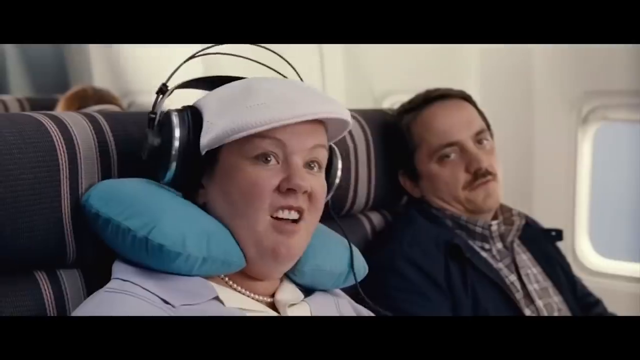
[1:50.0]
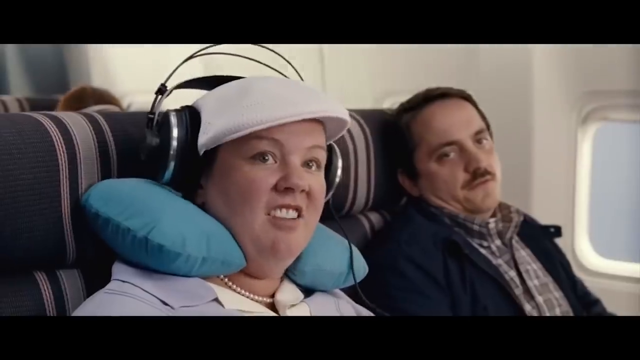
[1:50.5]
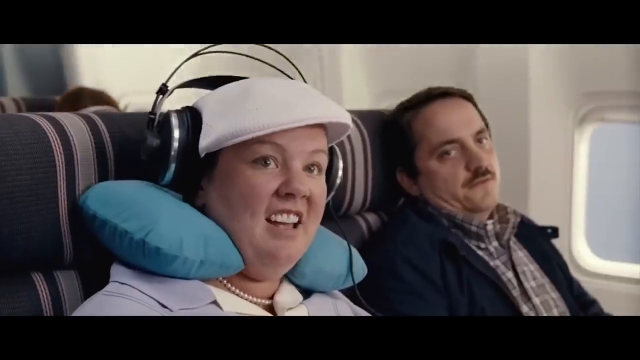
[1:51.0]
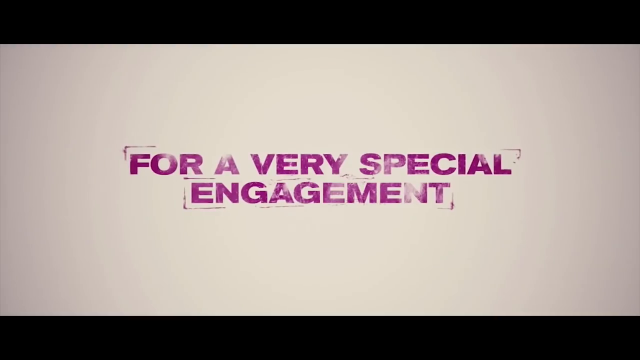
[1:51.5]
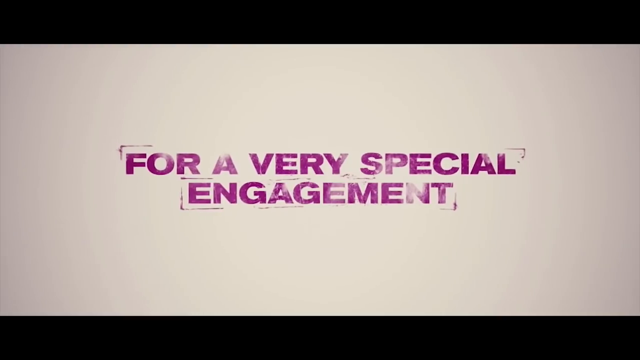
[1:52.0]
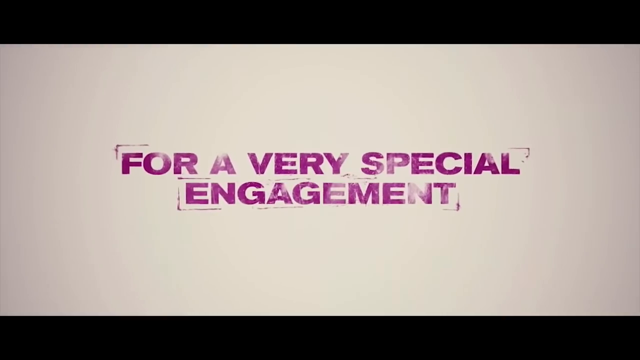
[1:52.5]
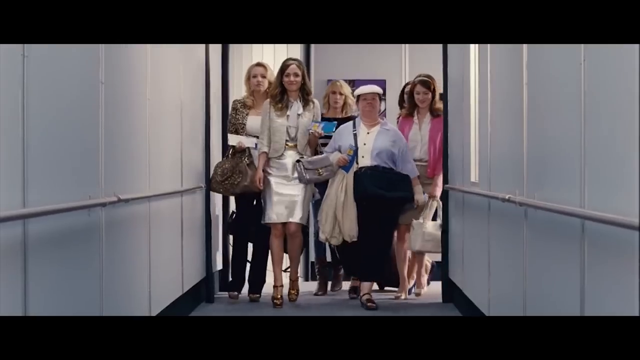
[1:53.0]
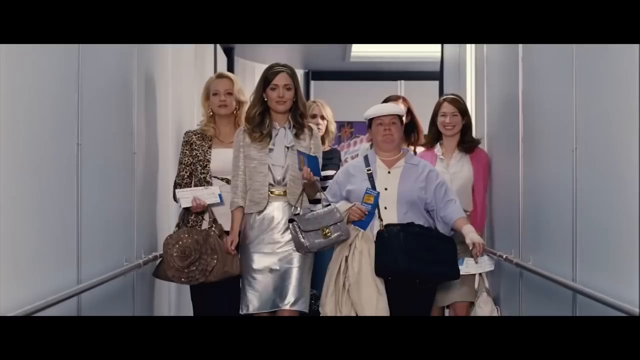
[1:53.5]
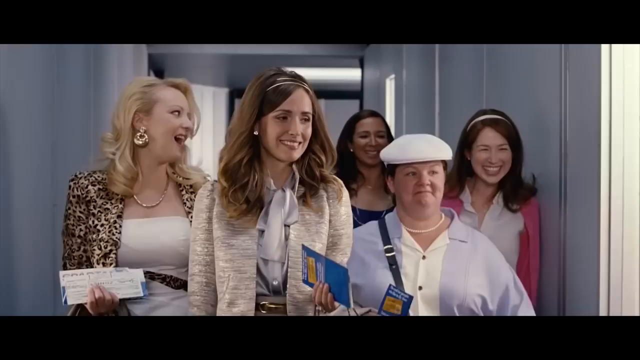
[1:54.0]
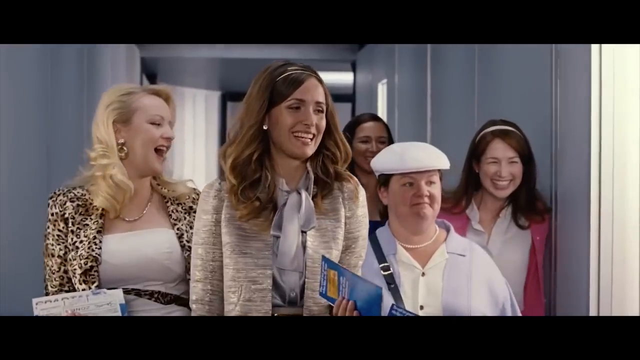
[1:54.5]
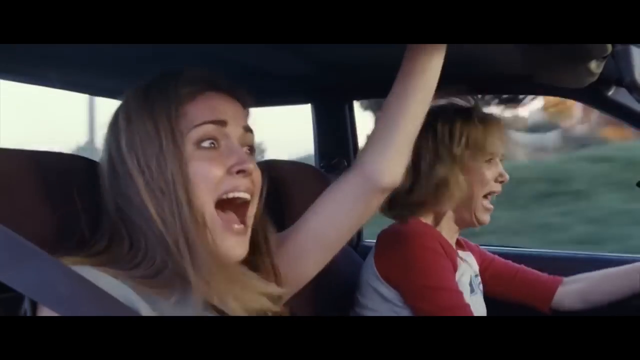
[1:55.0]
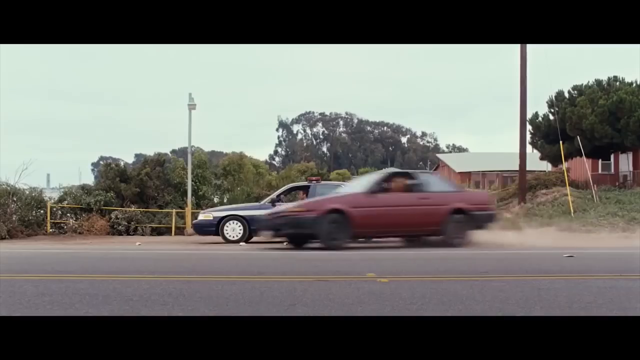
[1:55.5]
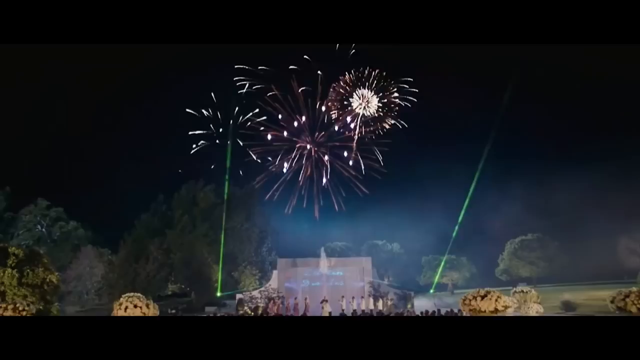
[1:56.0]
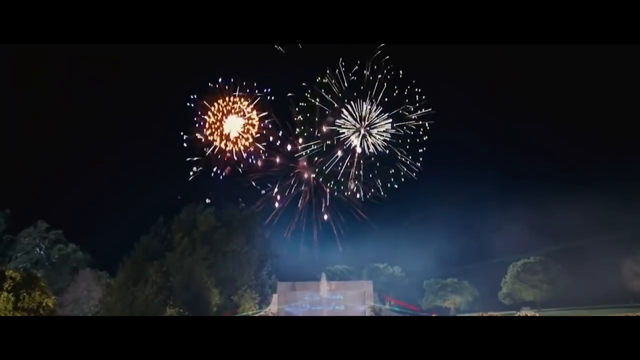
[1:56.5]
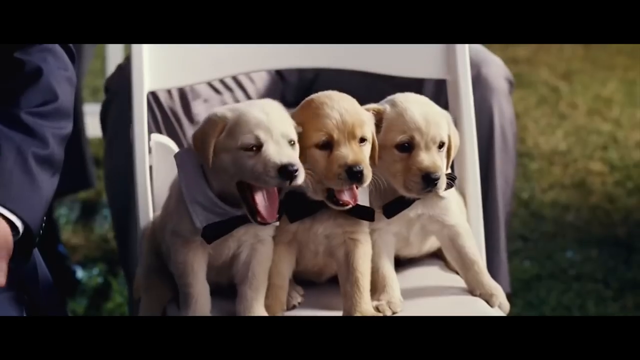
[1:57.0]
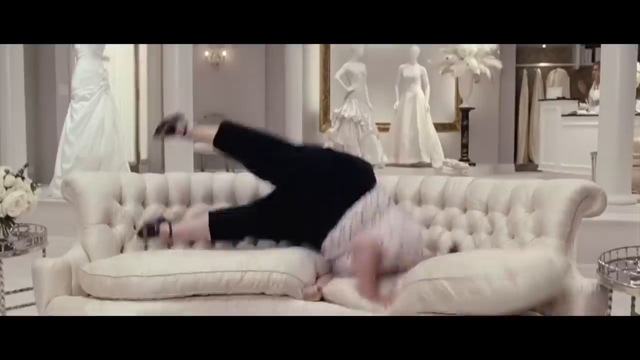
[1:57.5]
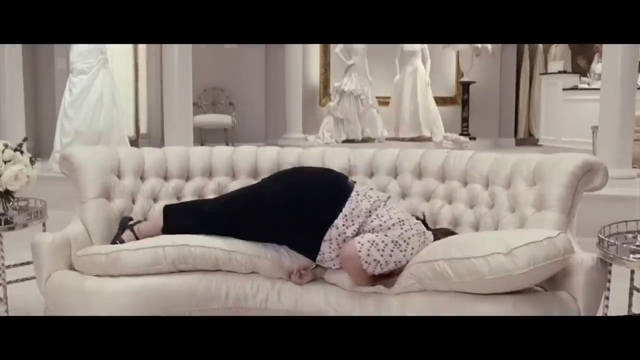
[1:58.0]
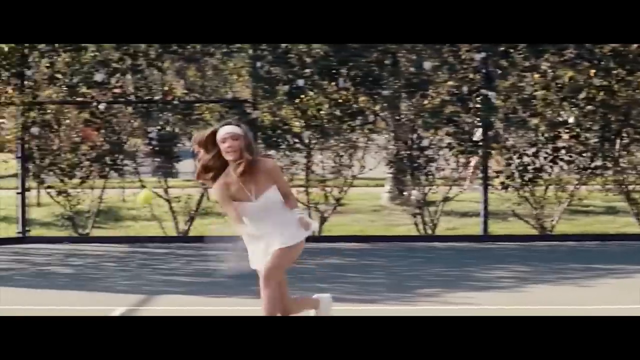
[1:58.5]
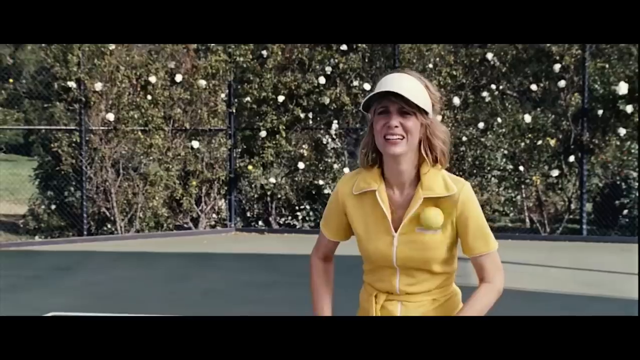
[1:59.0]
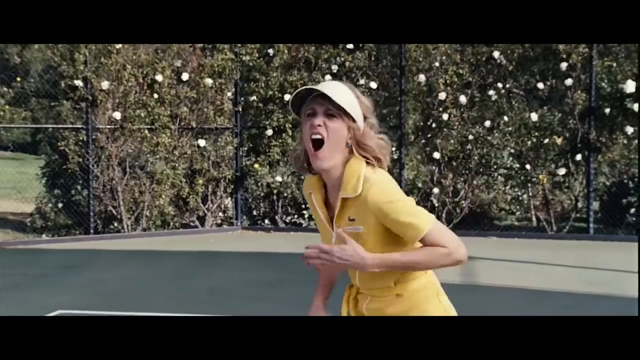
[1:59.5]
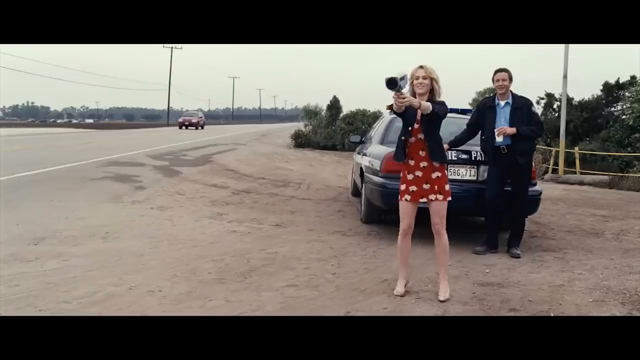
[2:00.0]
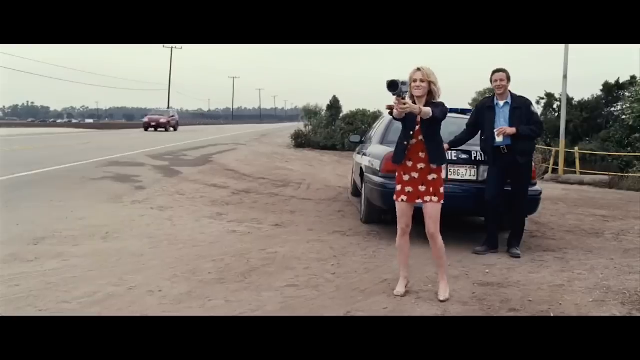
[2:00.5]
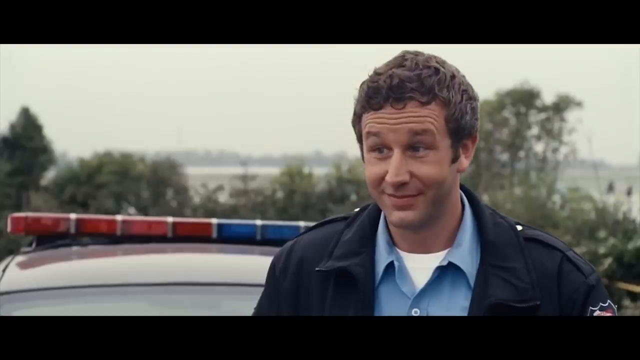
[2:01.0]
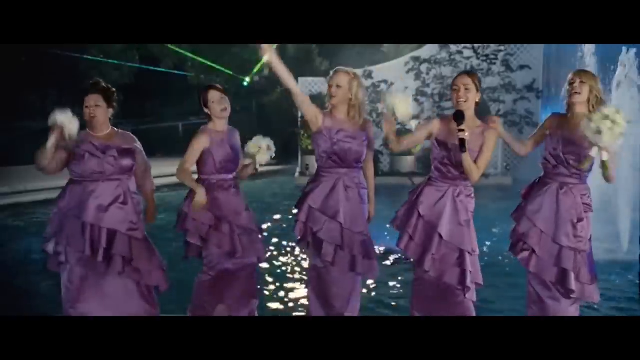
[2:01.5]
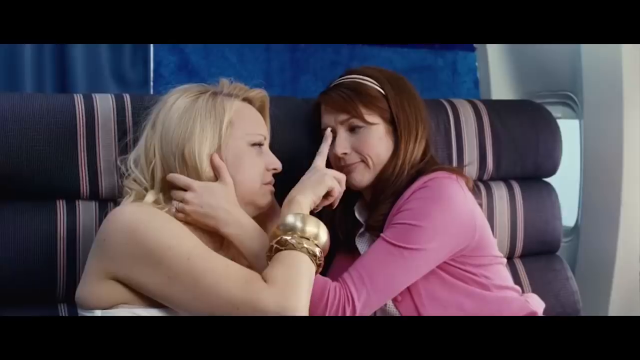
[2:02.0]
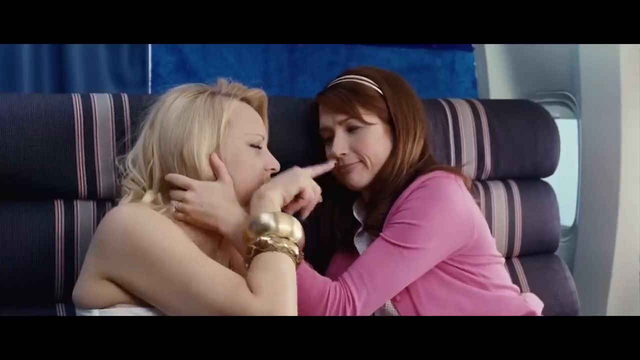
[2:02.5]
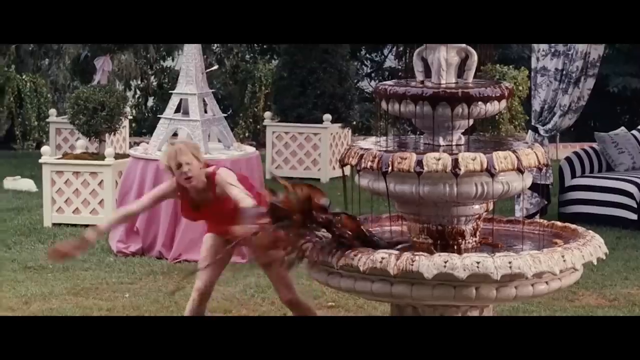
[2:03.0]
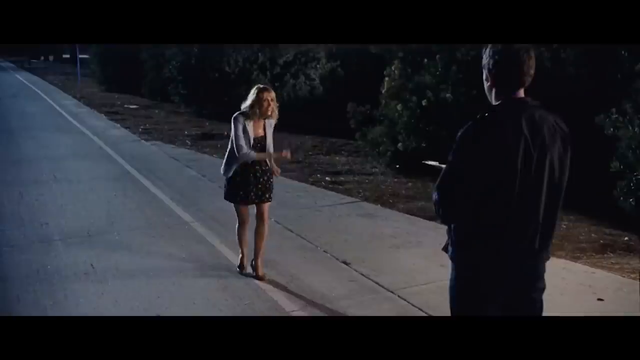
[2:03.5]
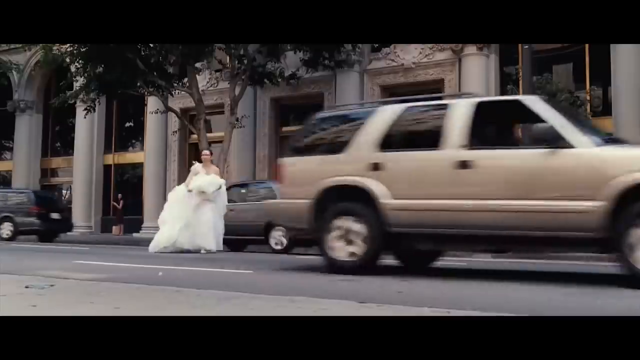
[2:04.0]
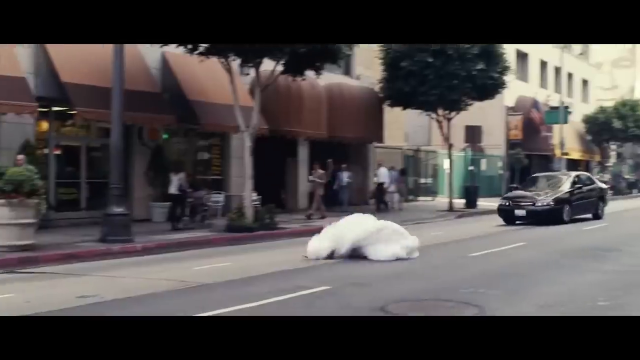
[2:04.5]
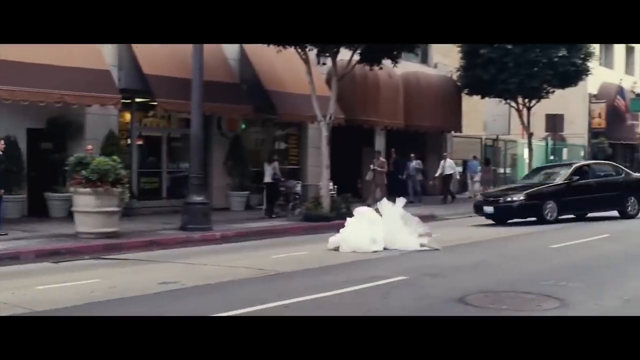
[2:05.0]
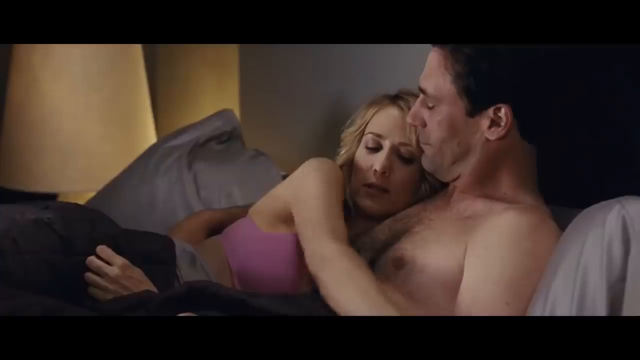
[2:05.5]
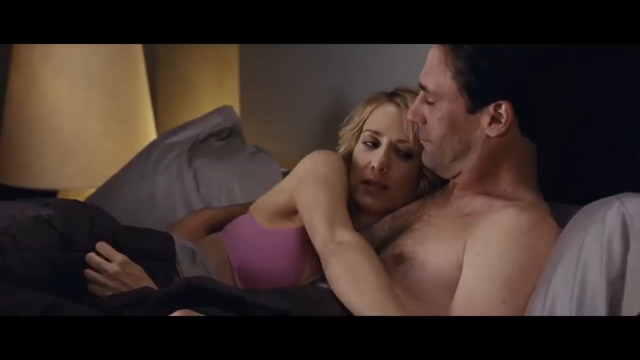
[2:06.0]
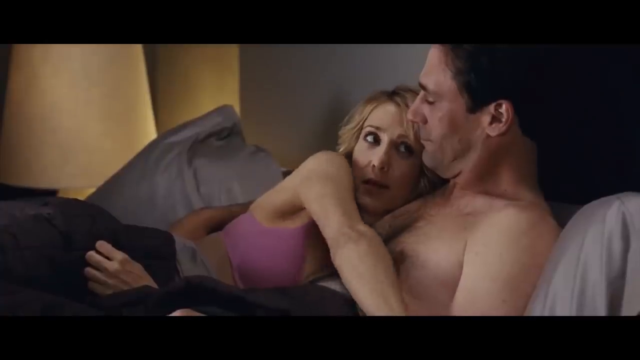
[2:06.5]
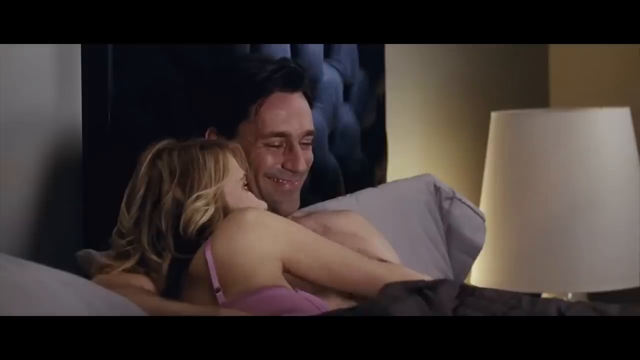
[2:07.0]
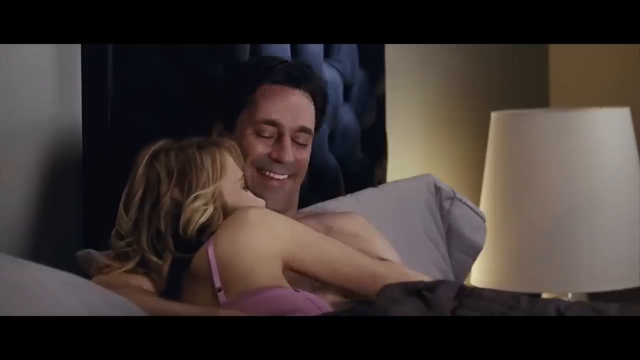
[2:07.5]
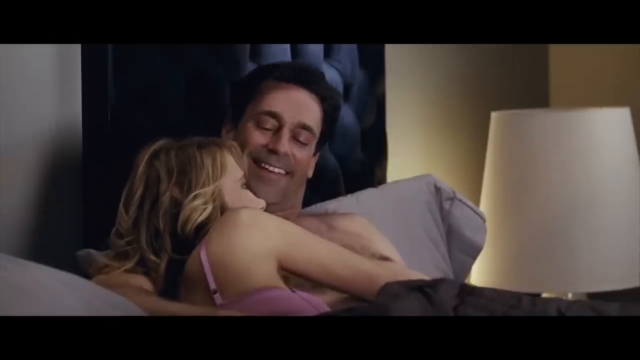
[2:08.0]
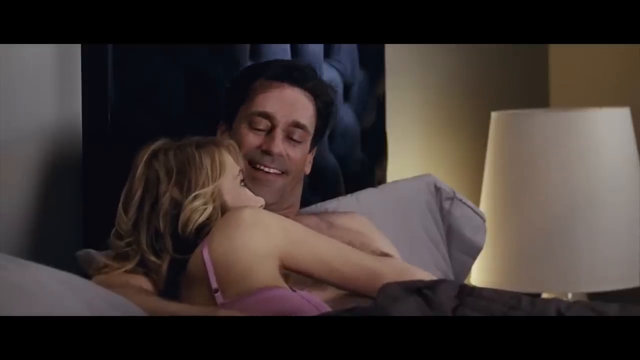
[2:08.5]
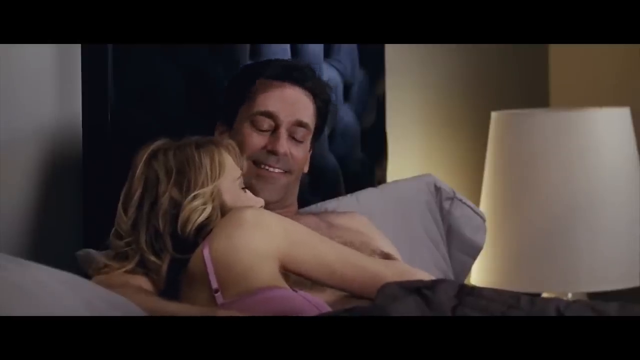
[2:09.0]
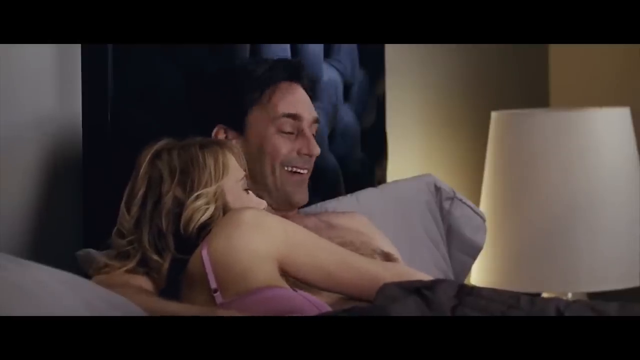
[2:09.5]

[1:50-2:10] The women are on an airplane. One of them has a blue neck pillow around her neck, large headphones on her head and a white hat; she looks out, kind of shocked. A sign on the screen reads "for a very special engagement." The women then walk in a group down a boarding ramp, either to an airplane or leaving one. Next, two of the women drive down the road in a car: the one driving looks extremely scared, and the other looks extremely scared as she puts her hand up on the roof of the car and yells. They skid past a police officer. One woman trips over the back of a white couch and falls face first onto it. Two other women play tennis, and one of them is hit very hard in the chest by the tennis ball. A woman in a red dress stands on the side of the road holding up a radar gun, checking the speed of passing cars while a policeman stands behind her; she dances around as she holds the radar. All of the women then stand in a pool wearing purple dresses and dancing, one of them holding a microphone and singing. Different scenes of the women follow; one of them, wearing the wedding dress, runs down the street, trips and falls in the middle of the street, and is almost hit by a car. Finally, the name of the movie appears: "Bridesmaids."